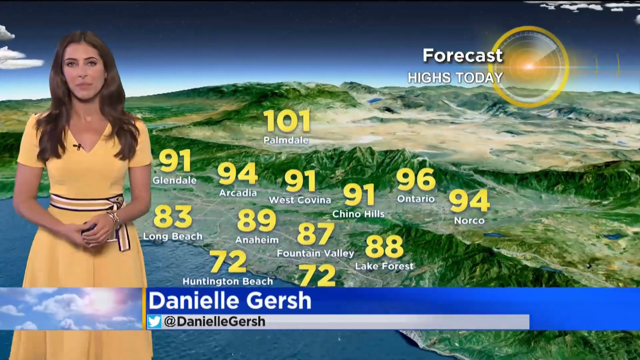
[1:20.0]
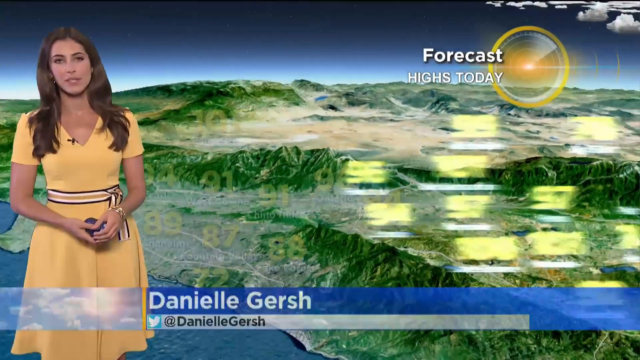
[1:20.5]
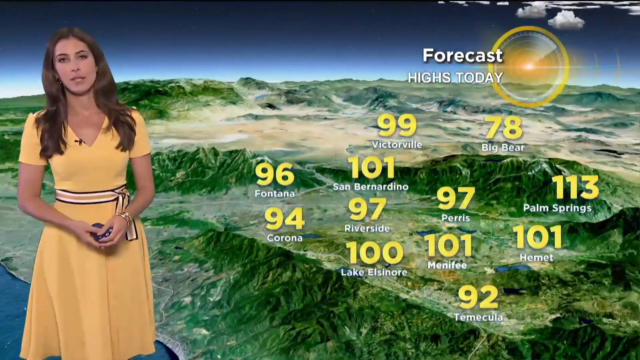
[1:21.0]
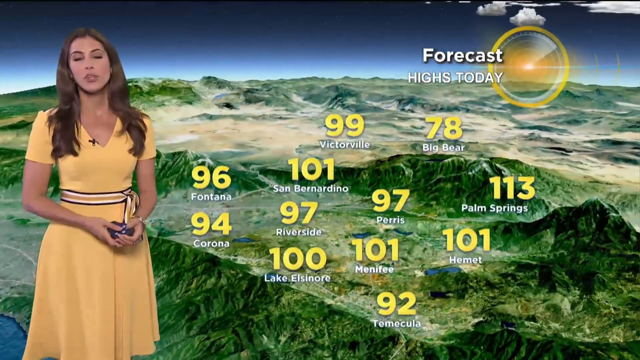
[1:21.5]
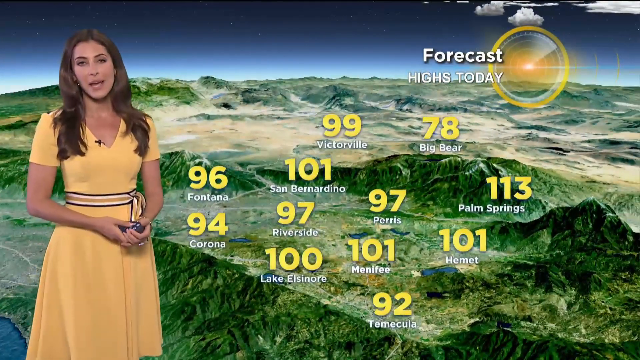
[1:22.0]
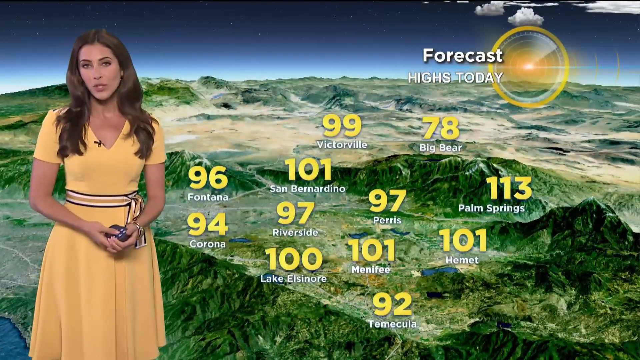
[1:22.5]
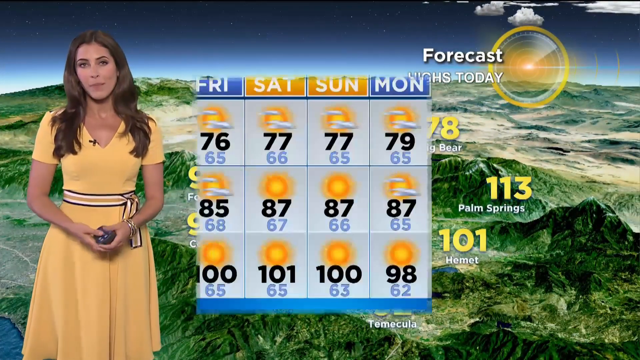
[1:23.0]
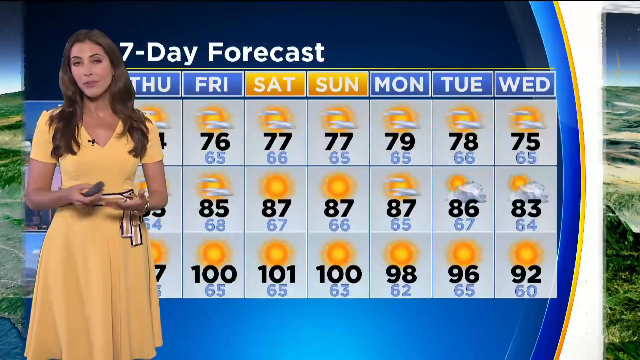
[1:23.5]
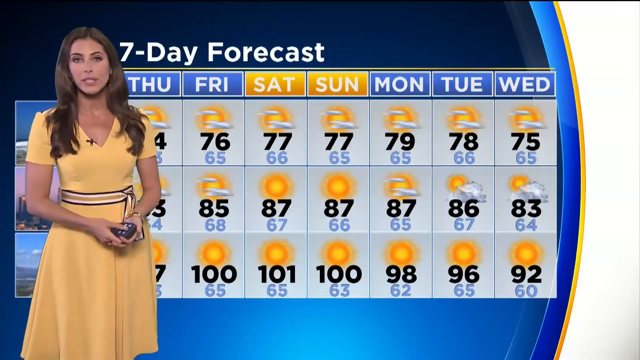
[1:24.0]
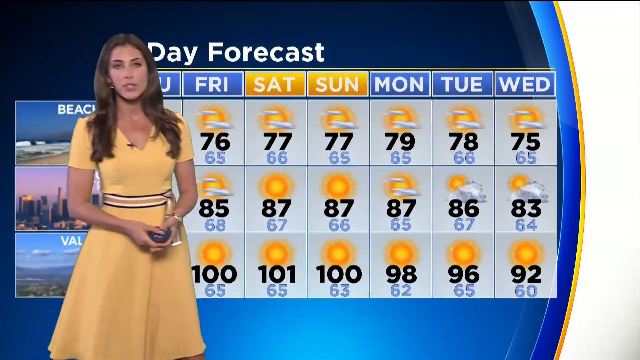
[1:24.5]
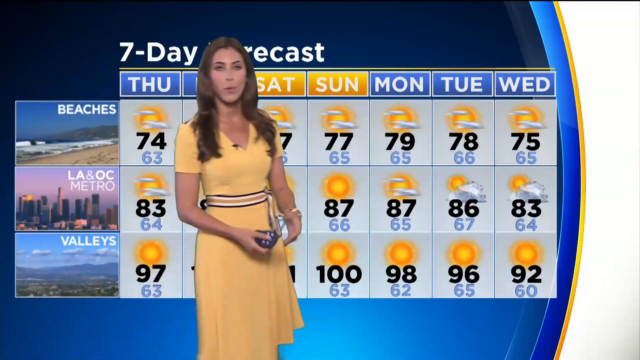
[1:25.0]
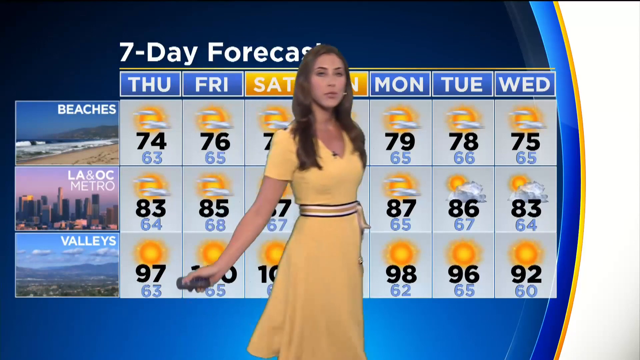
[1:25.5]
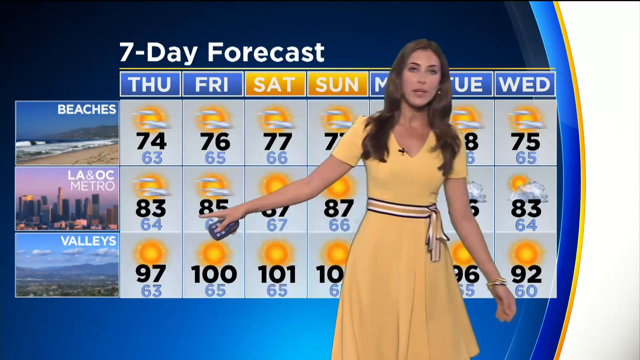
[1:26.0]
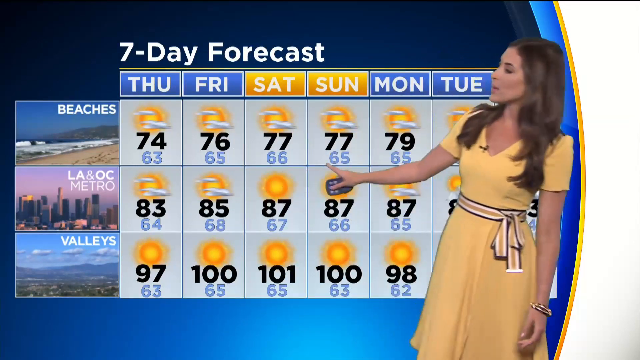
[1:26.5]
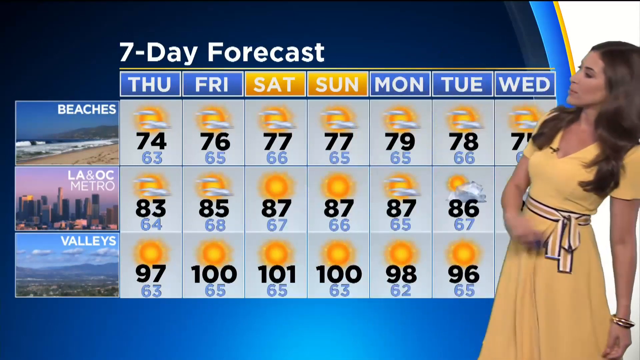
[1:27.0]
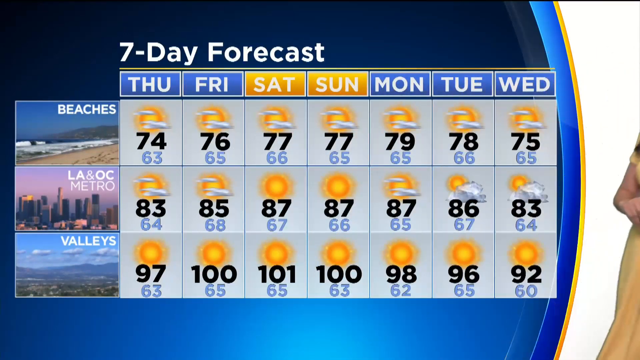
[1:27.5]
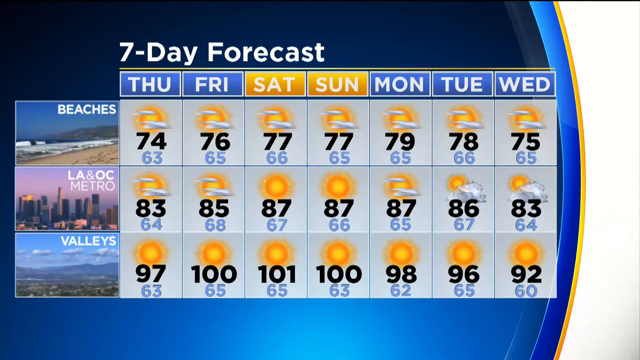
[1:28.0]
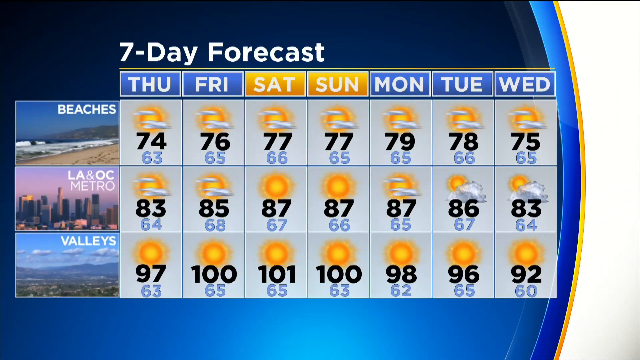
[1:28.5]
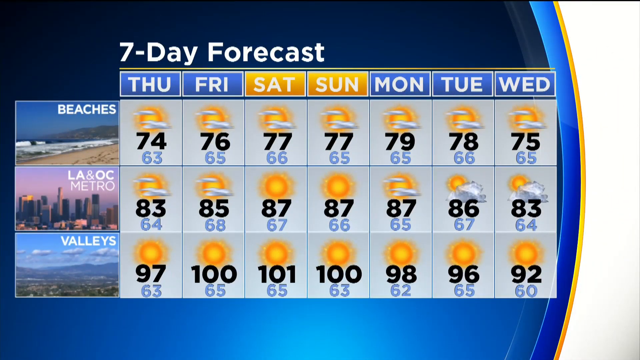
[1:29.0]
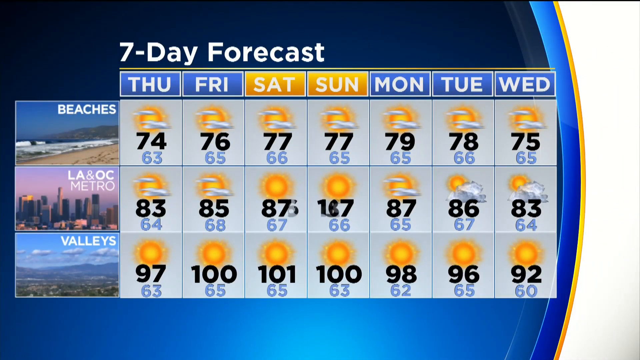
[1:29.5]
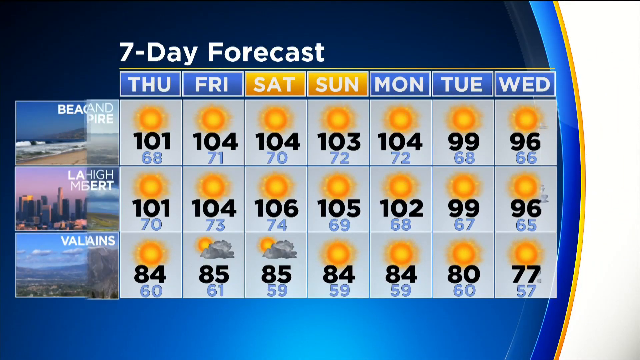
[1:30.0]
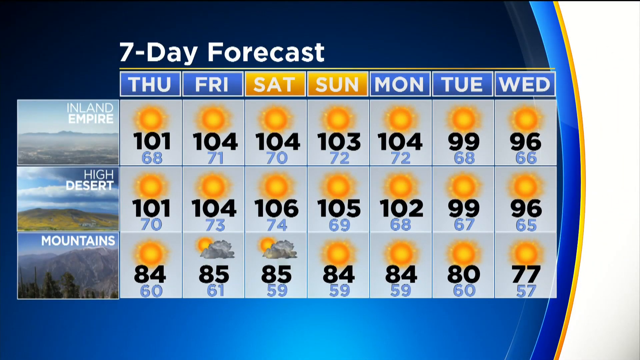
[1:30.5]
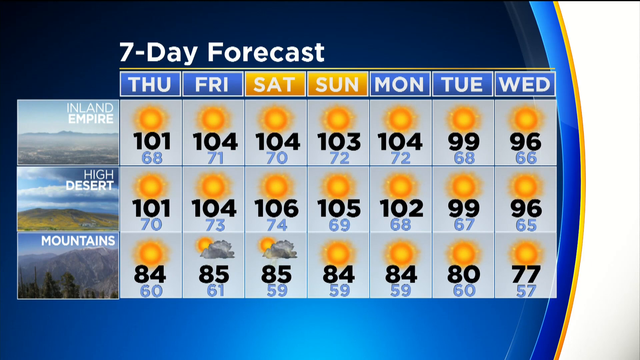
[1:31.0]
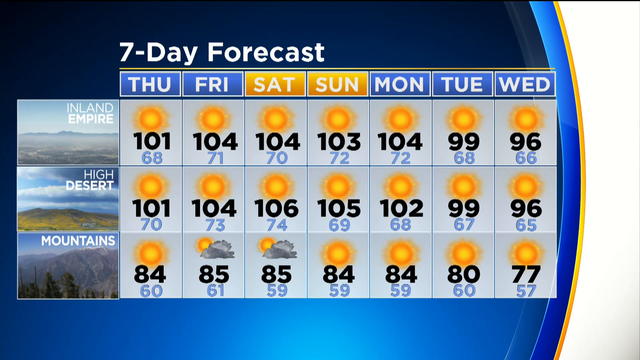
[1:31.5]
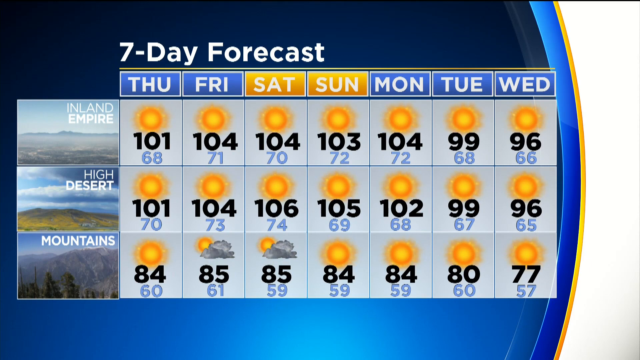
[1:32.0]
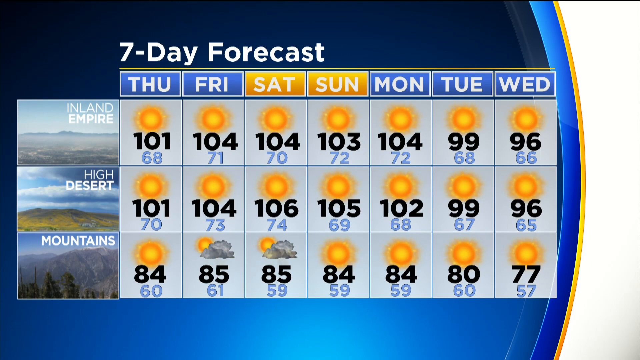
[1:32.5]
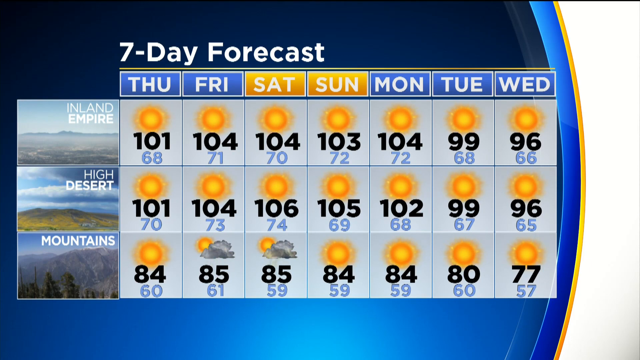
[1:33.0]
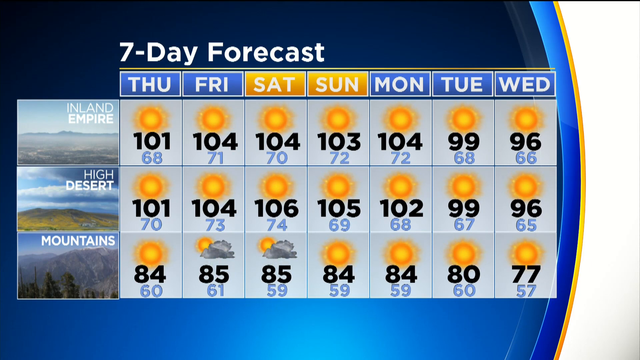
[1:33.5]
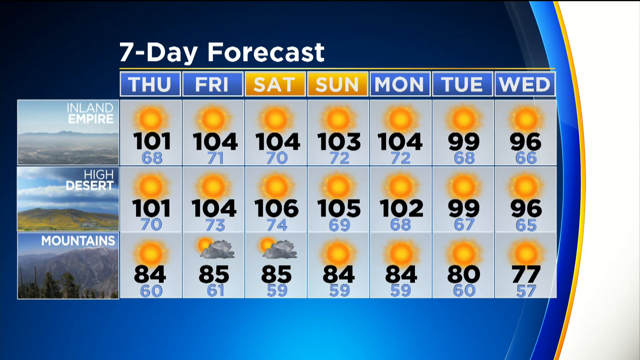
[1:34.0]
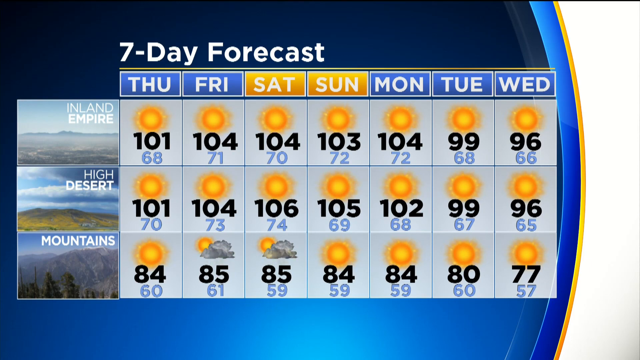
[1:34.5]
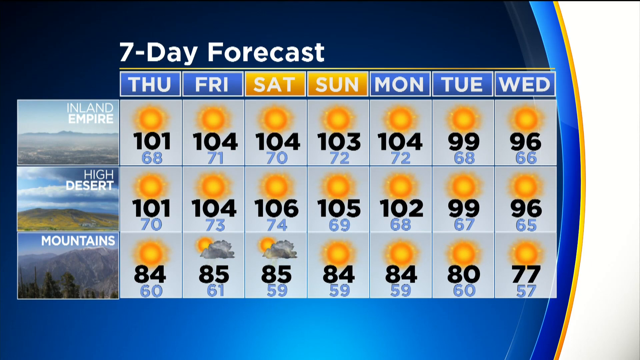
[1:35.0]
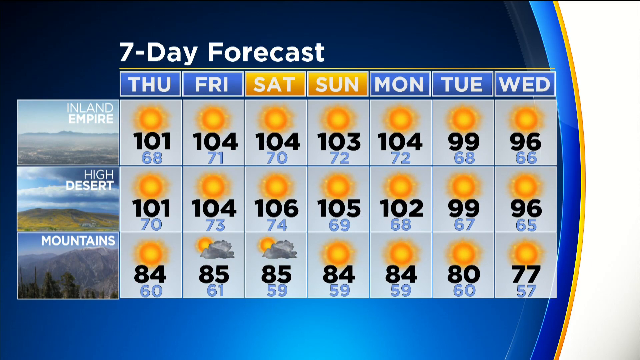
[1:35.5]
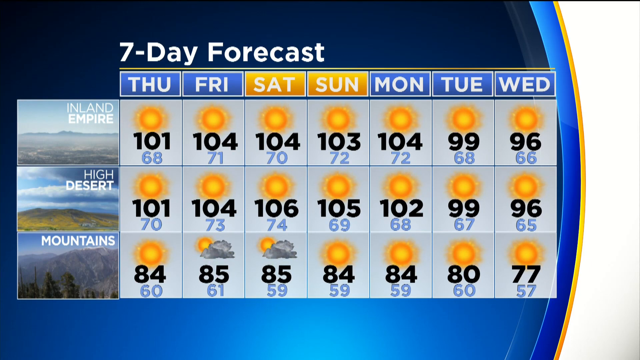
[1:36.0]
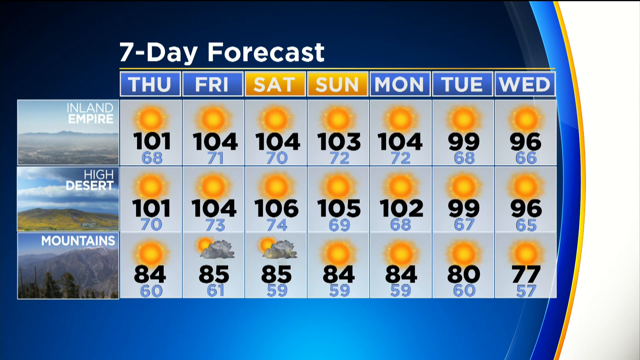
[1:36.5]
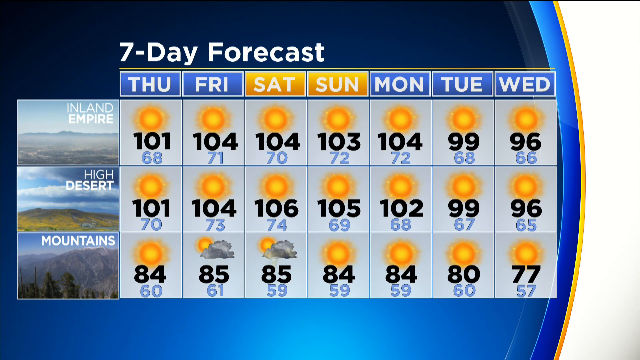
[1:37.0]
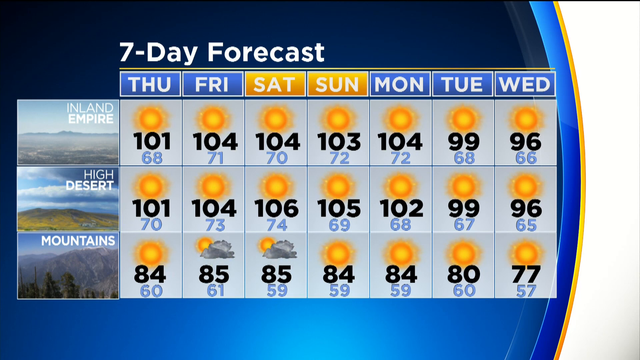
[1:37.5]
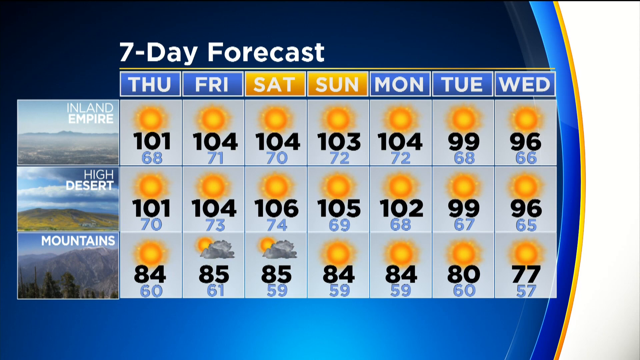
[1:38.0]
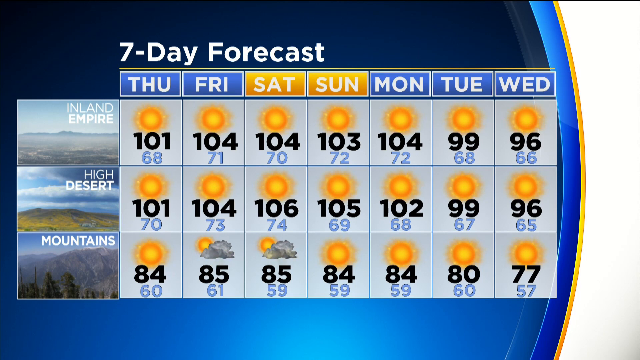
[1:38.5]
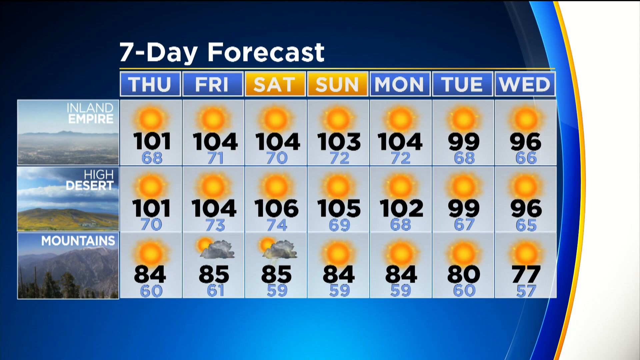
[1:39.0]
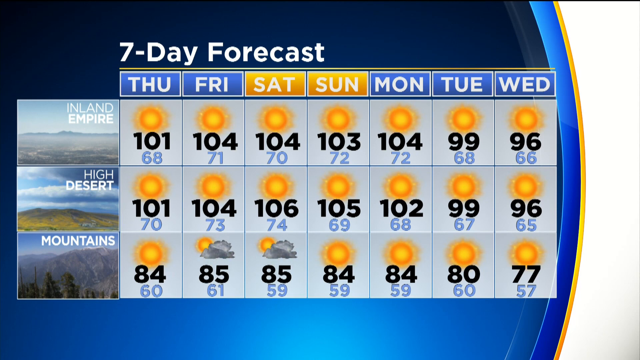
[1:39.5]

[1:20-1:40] She shows the highs of today and a seven-day forecast, from Thursday until Wednesday, focusing on the beach, the LA and OC metro, and the valleys. For the valley it shows clouds, with gray skies on Friday and Saturday, and then what seems to be some rain. Other days show a bit of cloud forming. In the mountains rain may form, with a bit of light showing as well. The high desert and the beach show sunny weather throughout the week, with no rain or clouds.